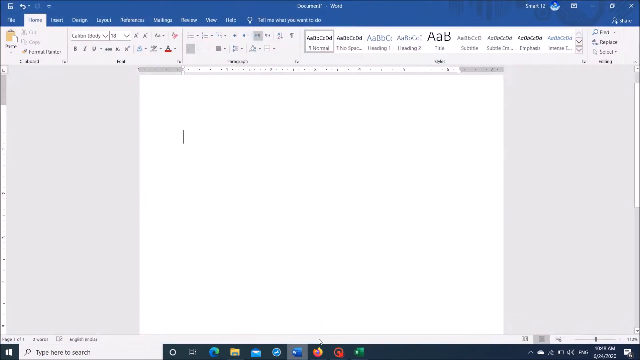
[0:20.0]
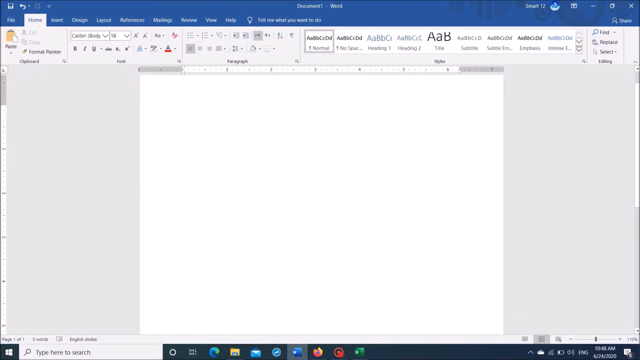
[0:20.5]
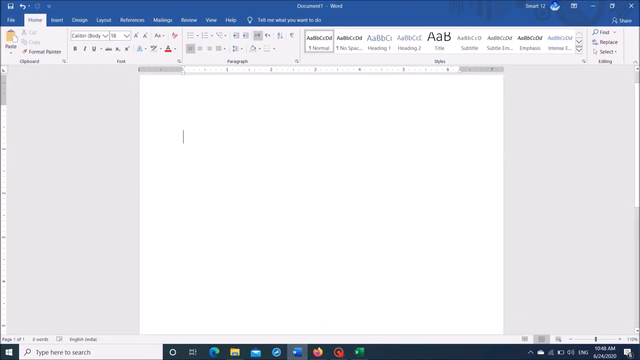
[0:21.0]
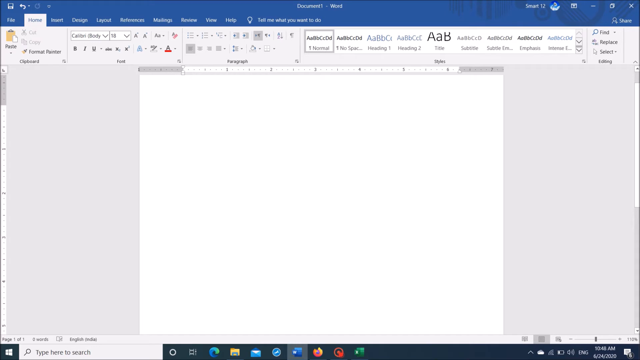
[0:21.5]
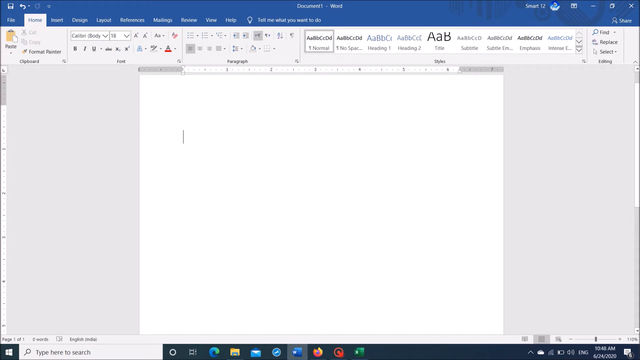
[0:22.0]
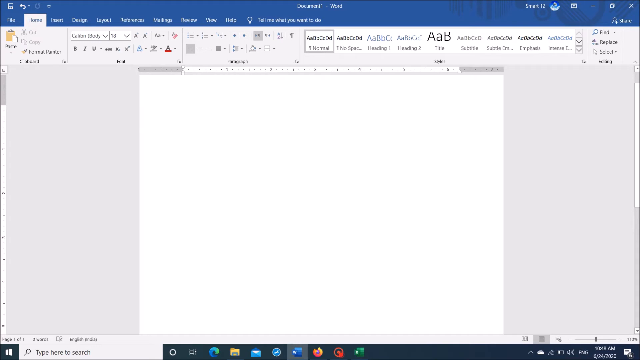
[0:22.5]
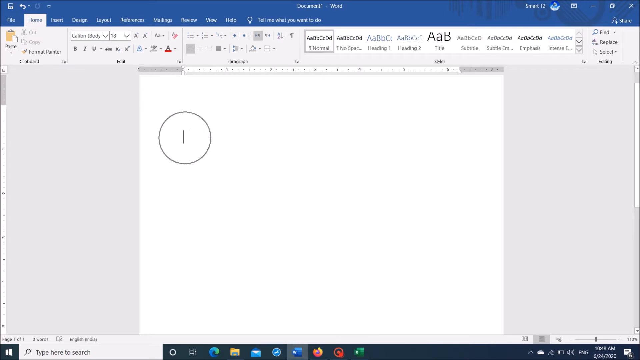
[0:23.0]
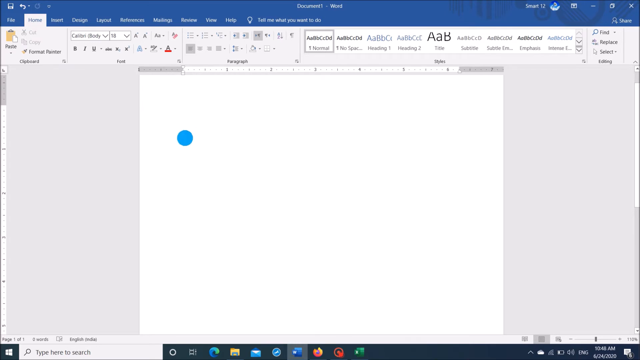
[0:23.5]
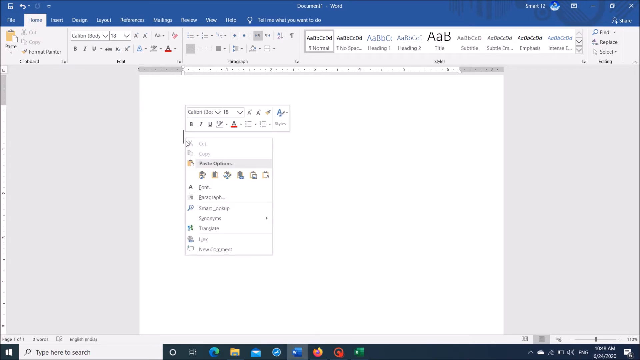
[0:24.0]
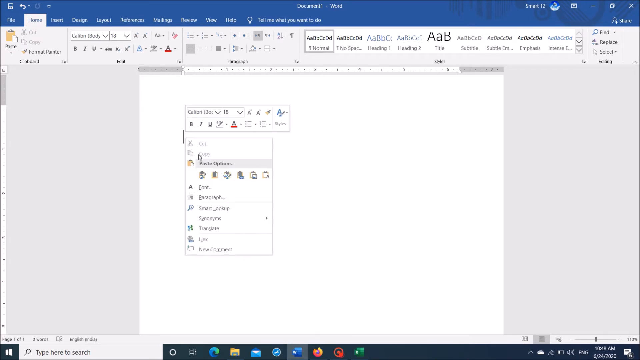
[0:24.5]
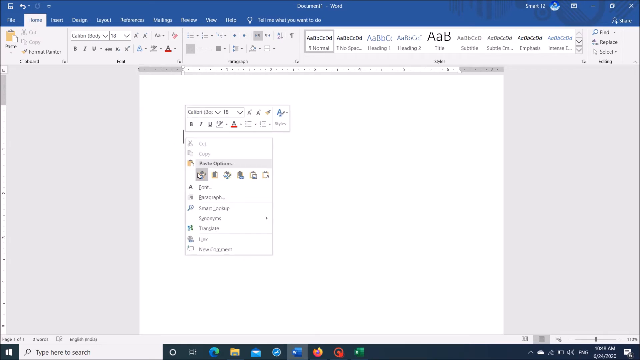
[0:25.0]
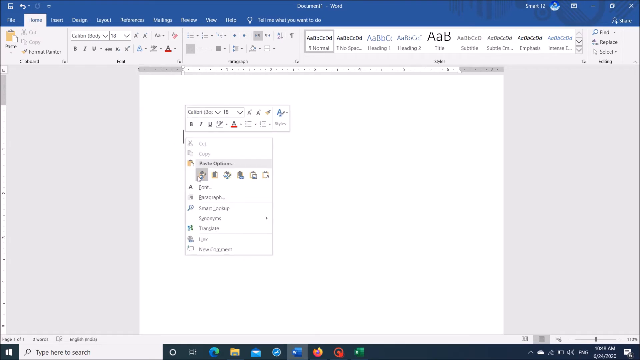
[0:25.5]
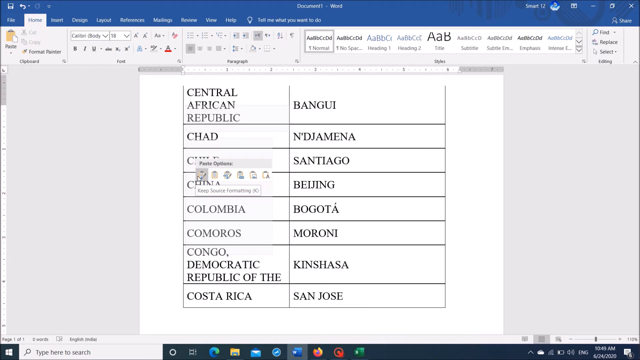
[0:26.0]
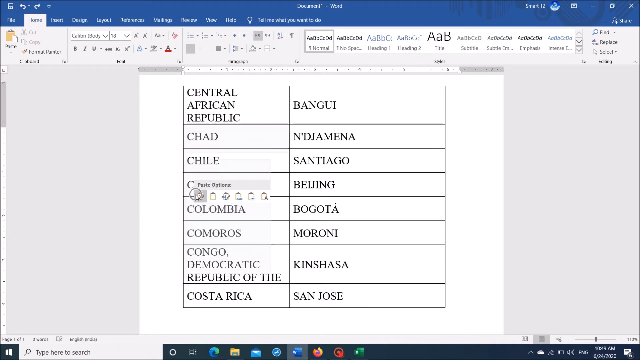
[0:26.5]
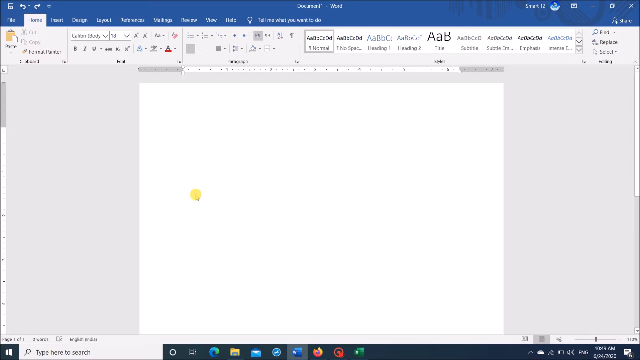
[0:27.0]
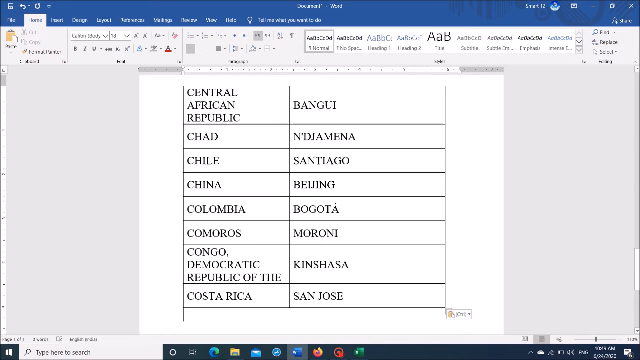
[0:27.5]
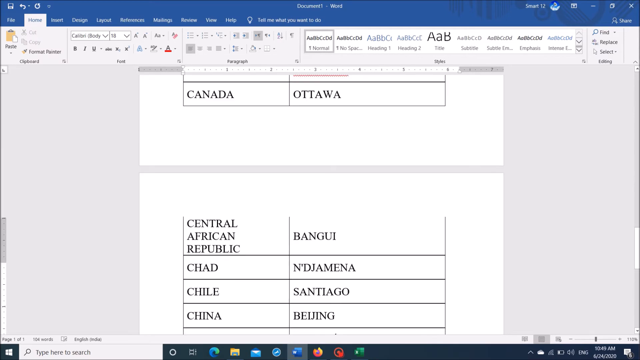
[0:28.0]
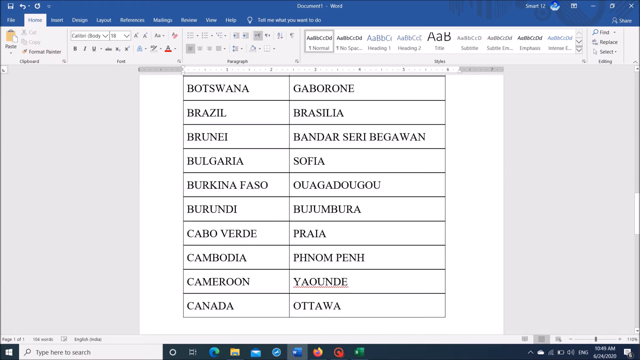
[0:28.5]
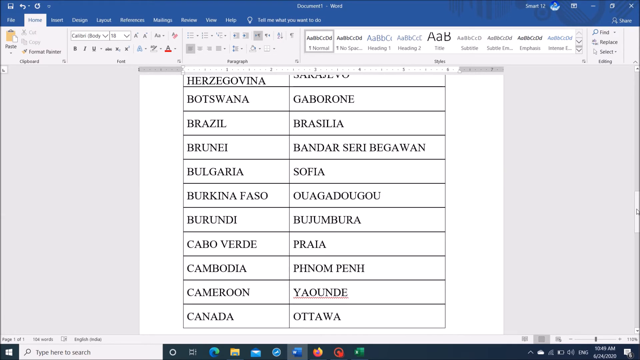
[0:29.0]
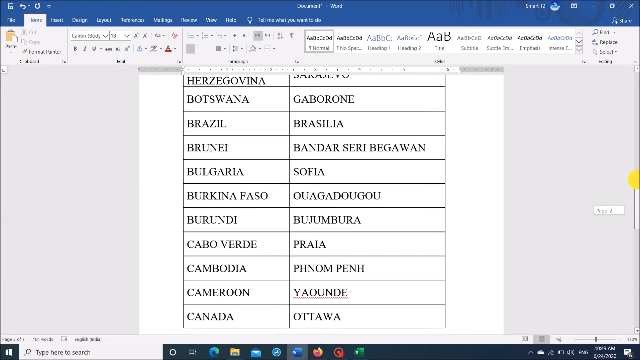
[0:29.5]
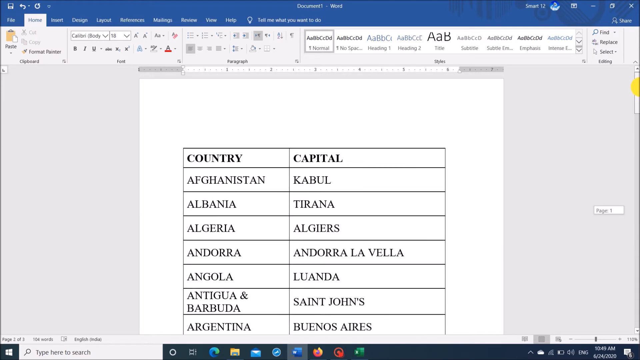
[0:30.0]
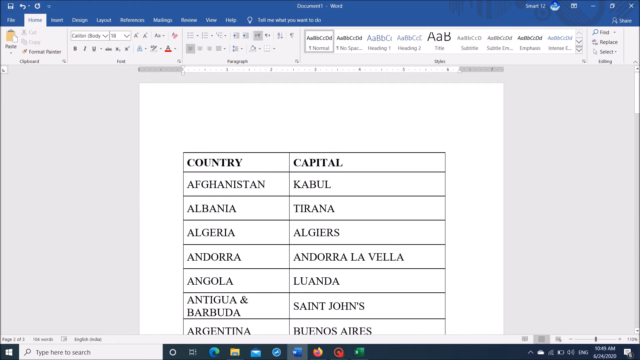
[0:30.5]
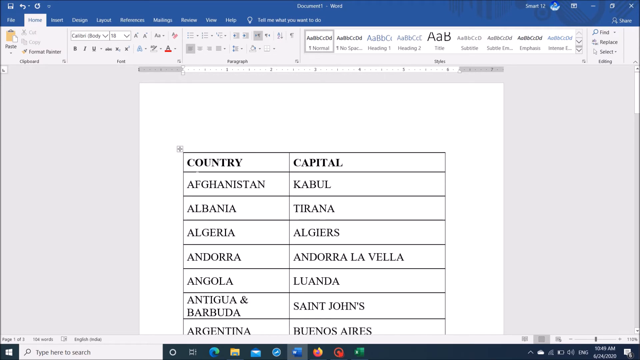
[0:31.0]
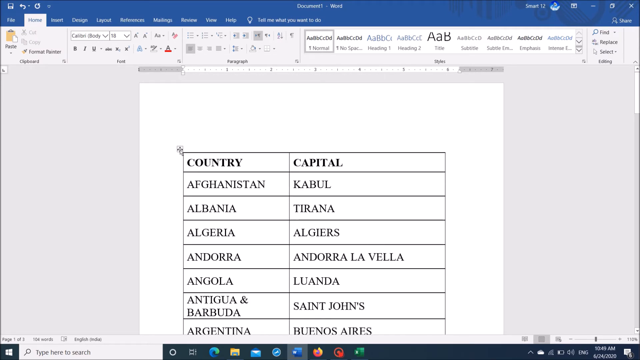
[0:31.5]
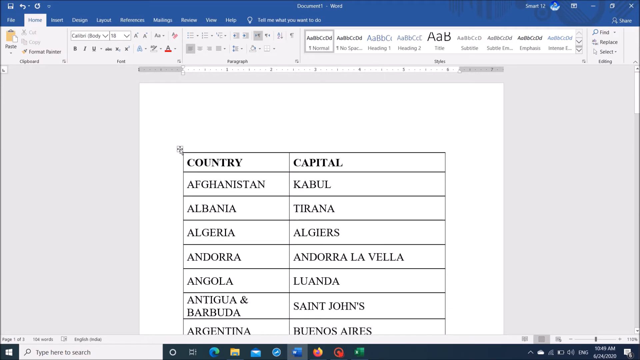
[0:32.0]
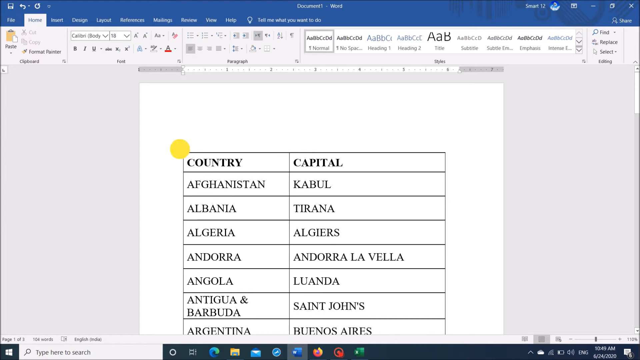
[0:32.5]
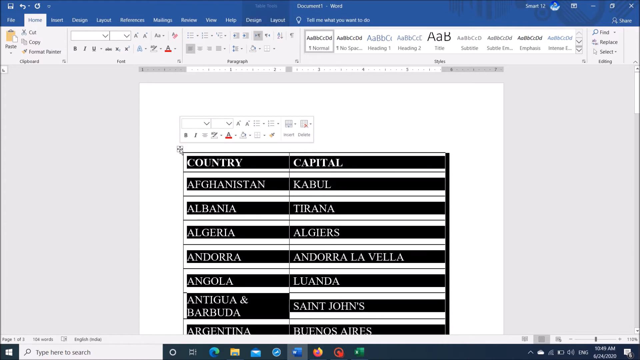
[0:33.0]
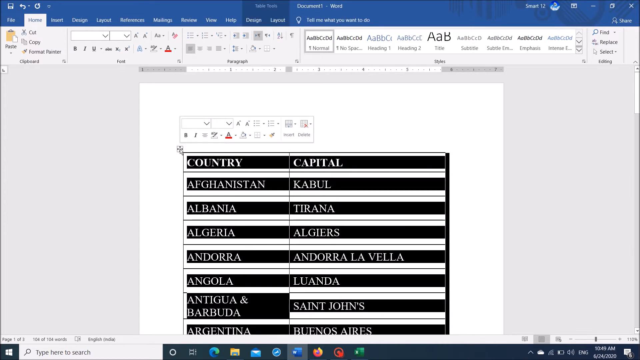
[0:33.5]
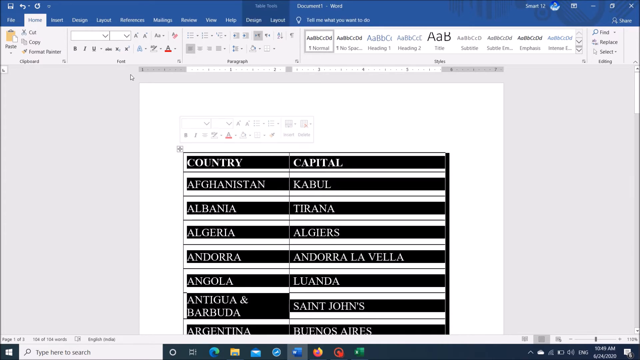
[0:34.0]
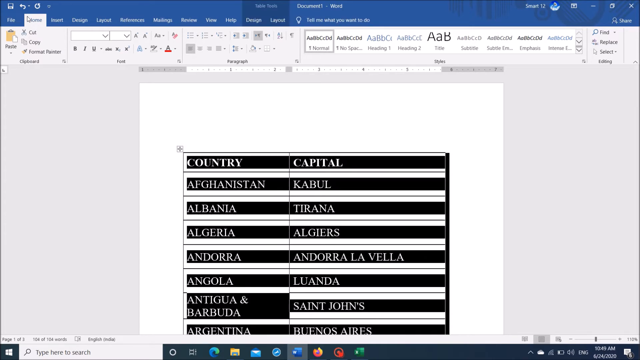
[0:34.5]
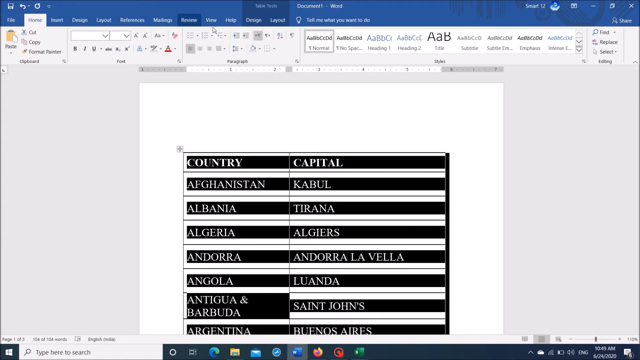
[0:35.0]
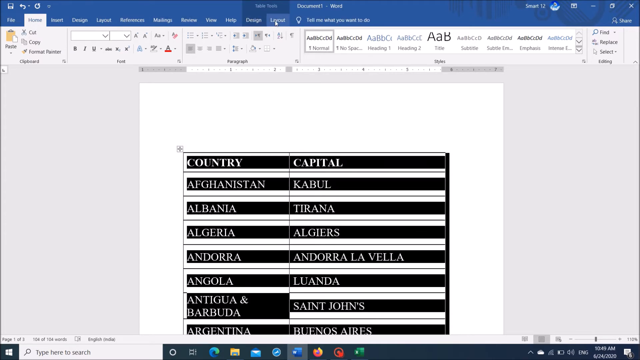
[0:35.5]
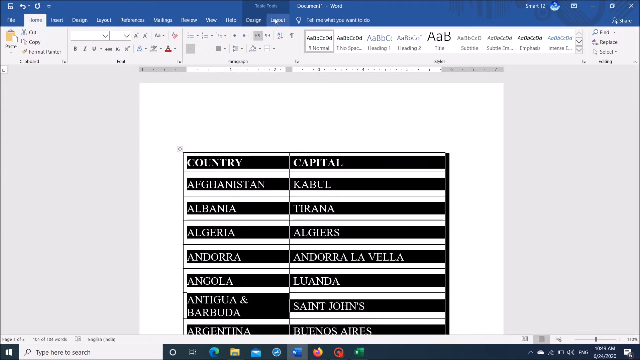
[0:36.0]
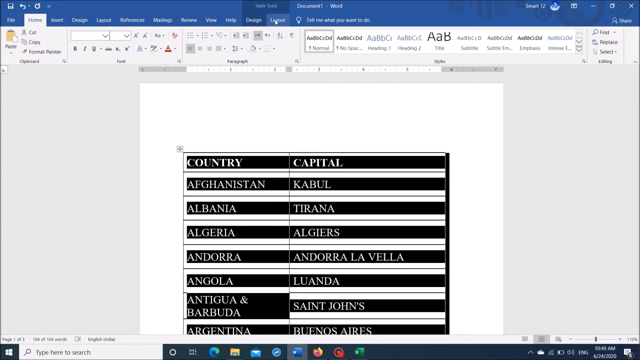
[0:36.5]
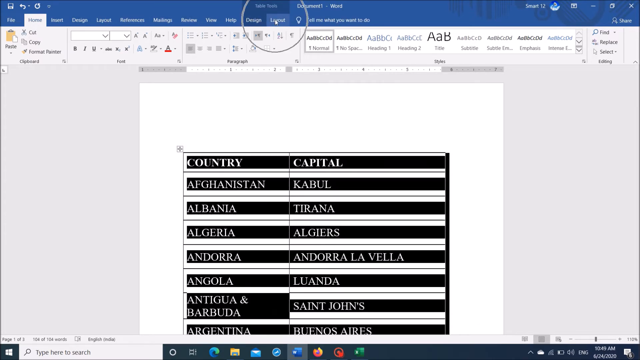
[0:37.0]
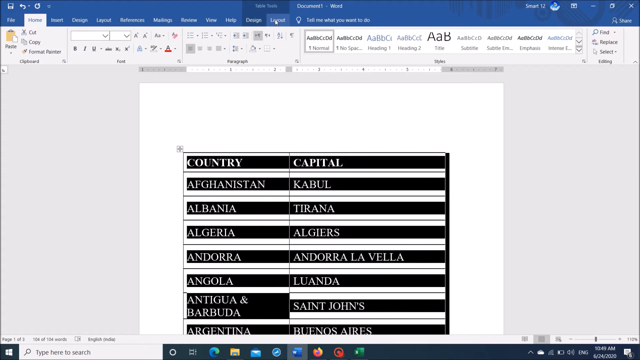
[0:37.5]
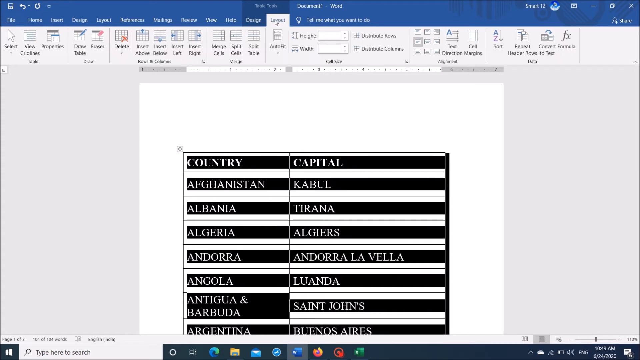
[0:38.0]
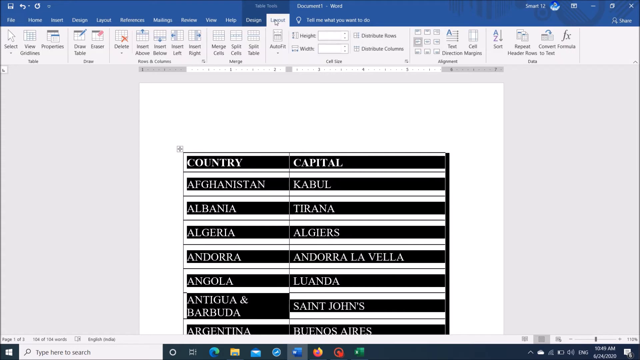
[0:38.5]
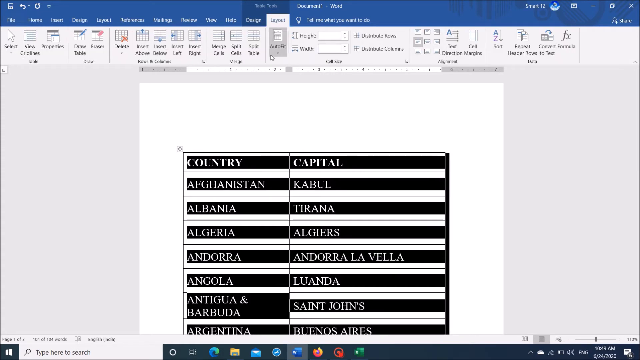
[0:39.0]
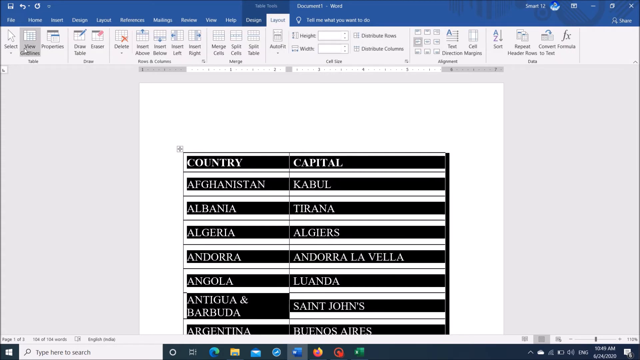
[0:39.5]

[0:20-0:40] The person now seems to be in Microsoft Word, with a blank page and various types of writing at the top right of the screen. They right-click and paste the same content that was copied. There are two columns: the left column has country and the right column has capitals. They click on it again and seem to be changing the layout. The same countries and capitals are still there, including Afghanistan, Albania, Algeria, Andorra and Angola, and the capitals Kabul, Tirana, Algiers, Luanda and St. John's.